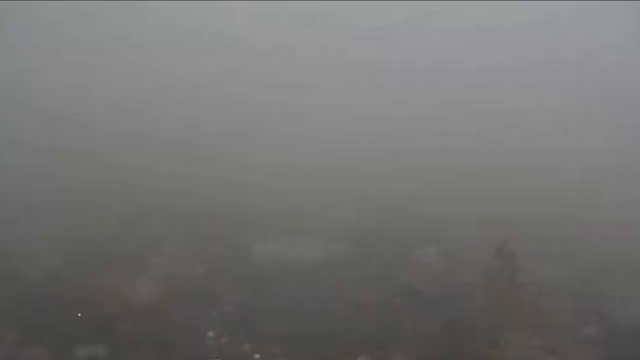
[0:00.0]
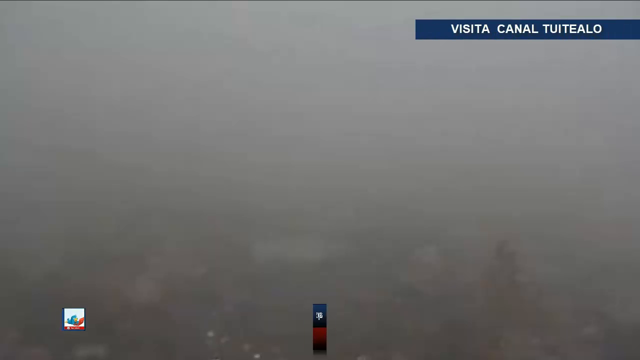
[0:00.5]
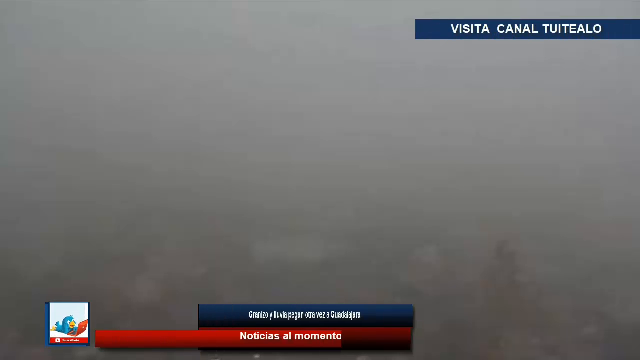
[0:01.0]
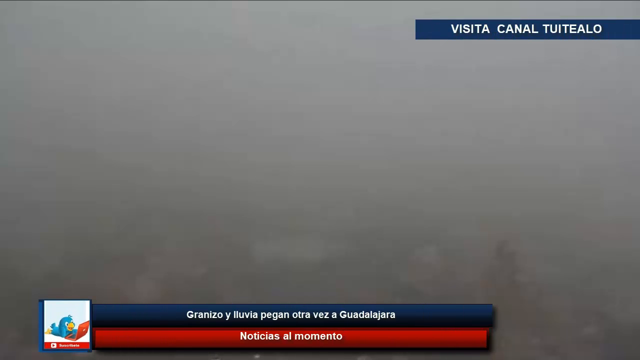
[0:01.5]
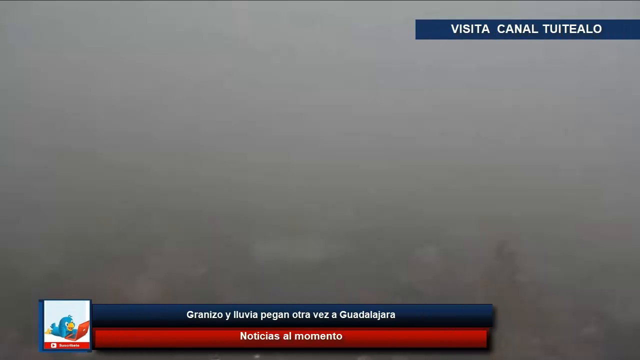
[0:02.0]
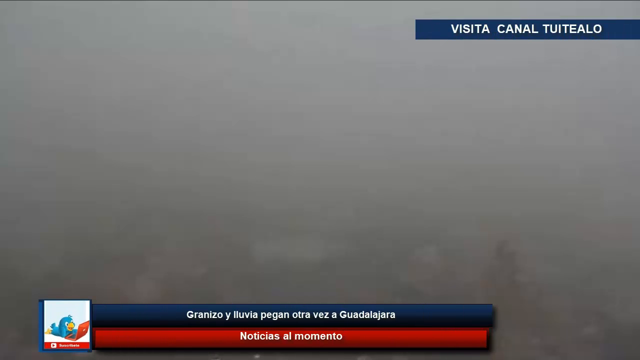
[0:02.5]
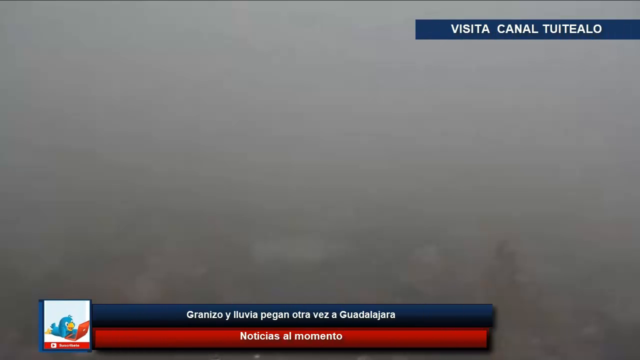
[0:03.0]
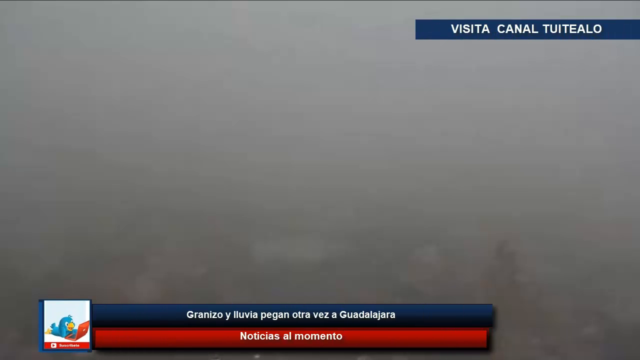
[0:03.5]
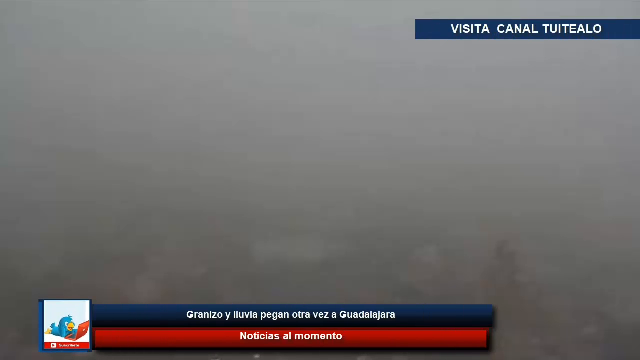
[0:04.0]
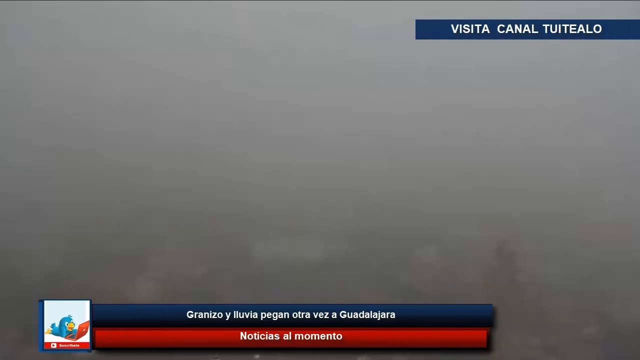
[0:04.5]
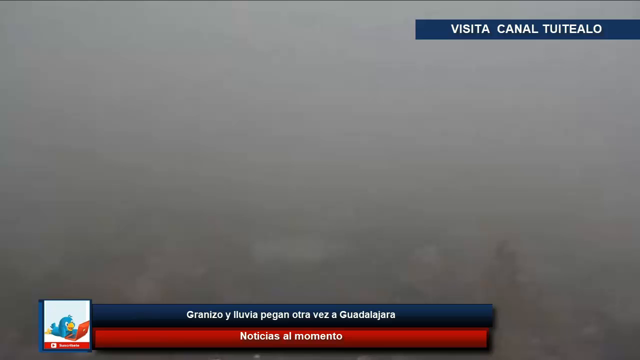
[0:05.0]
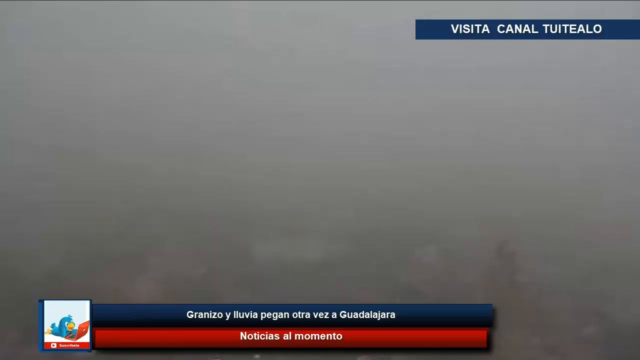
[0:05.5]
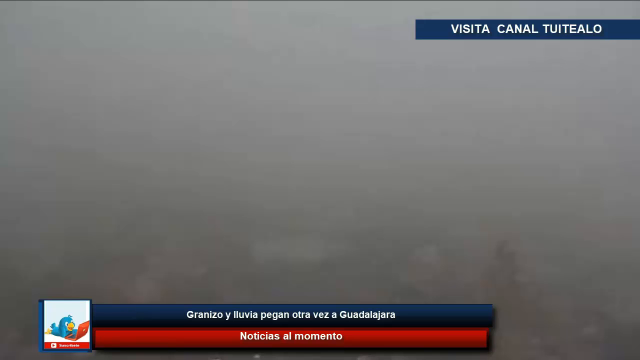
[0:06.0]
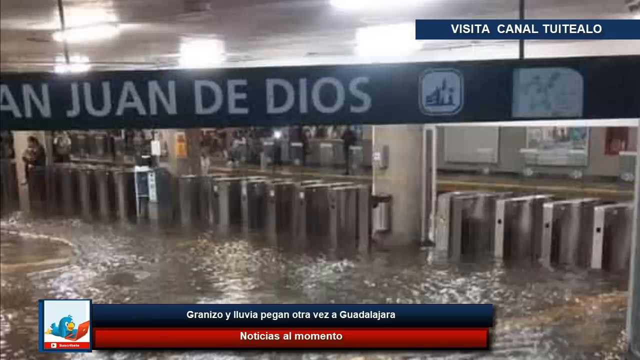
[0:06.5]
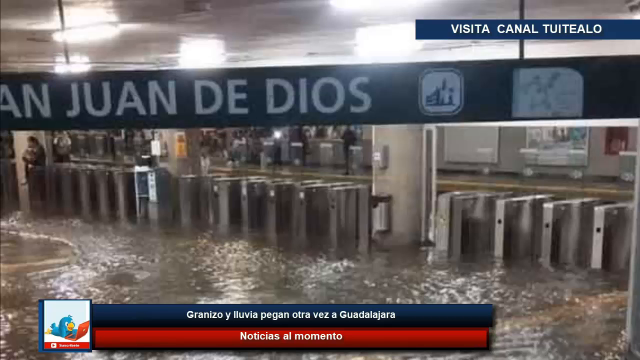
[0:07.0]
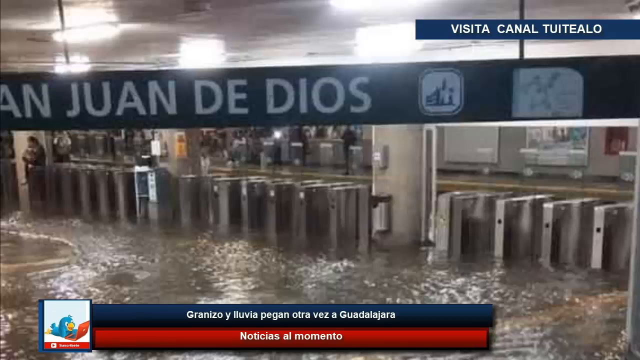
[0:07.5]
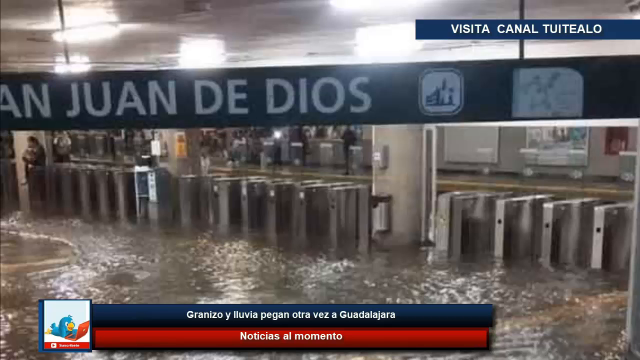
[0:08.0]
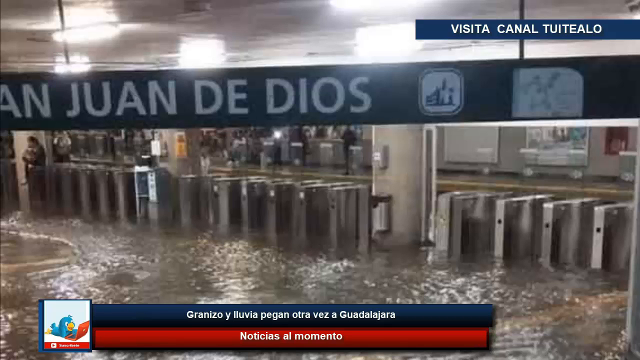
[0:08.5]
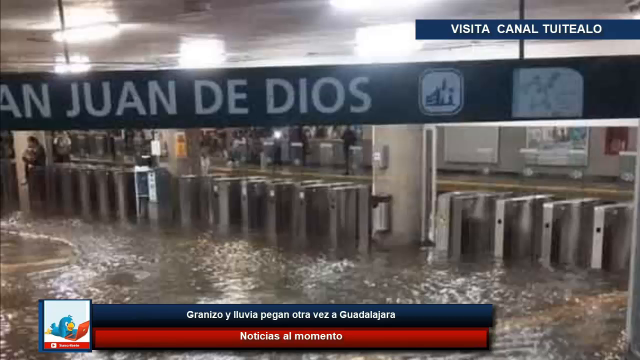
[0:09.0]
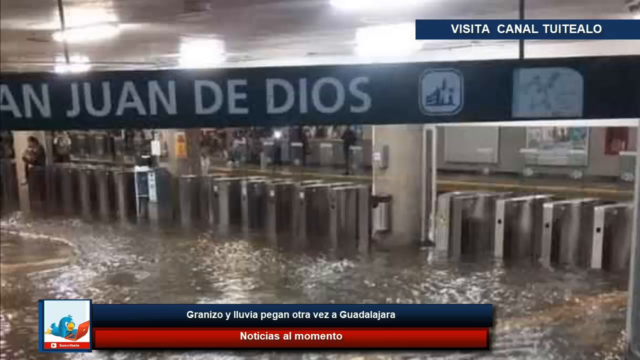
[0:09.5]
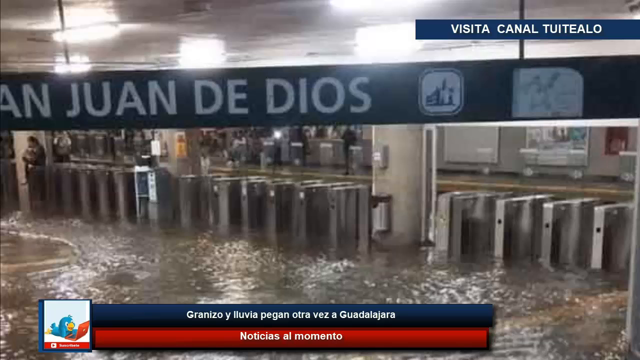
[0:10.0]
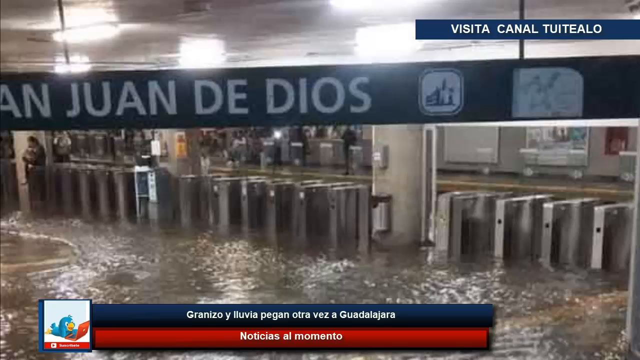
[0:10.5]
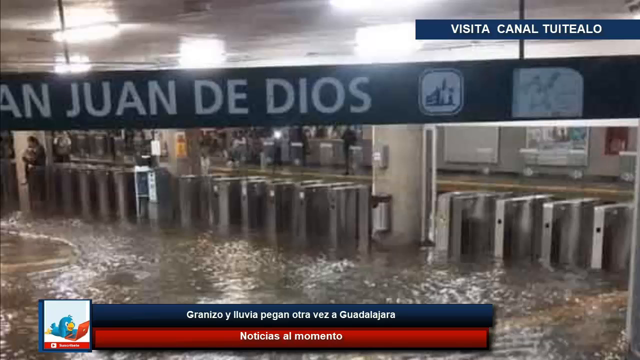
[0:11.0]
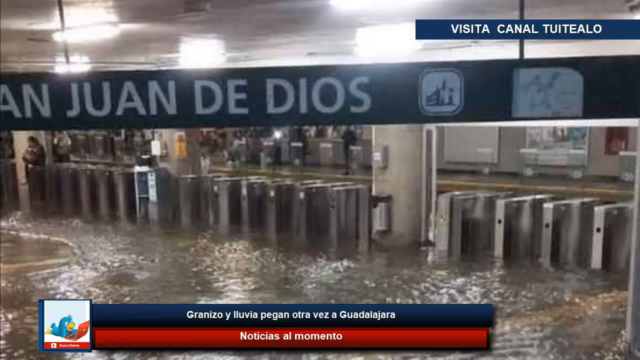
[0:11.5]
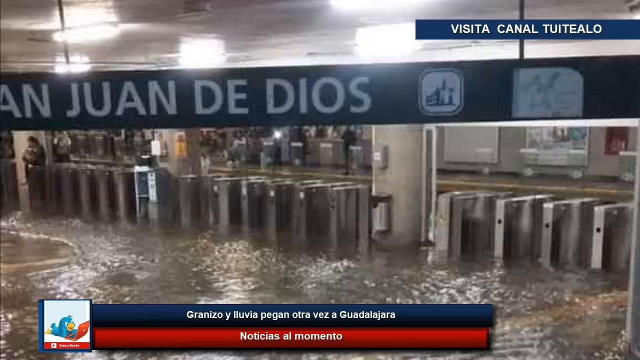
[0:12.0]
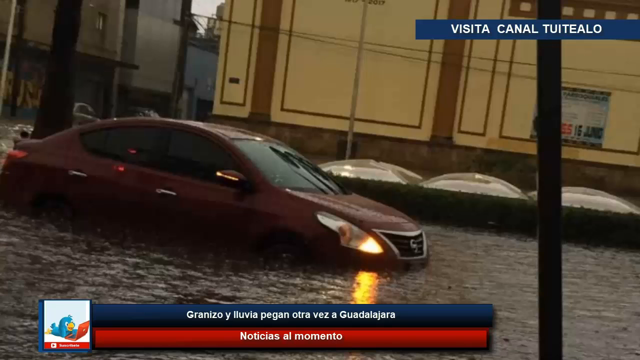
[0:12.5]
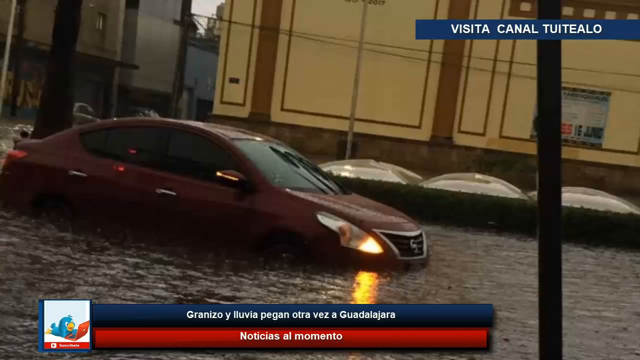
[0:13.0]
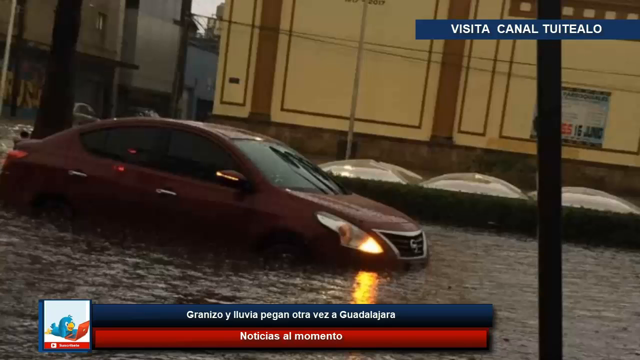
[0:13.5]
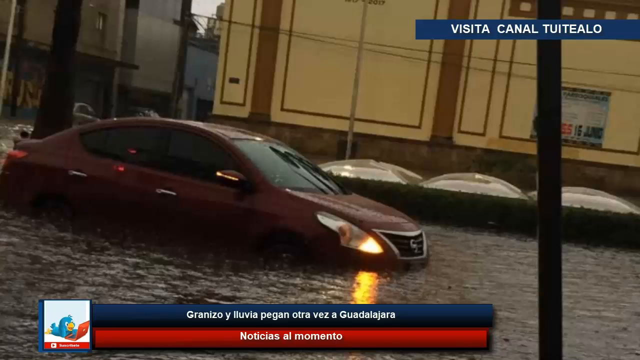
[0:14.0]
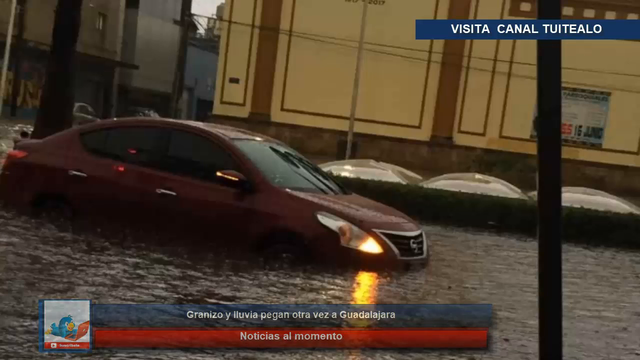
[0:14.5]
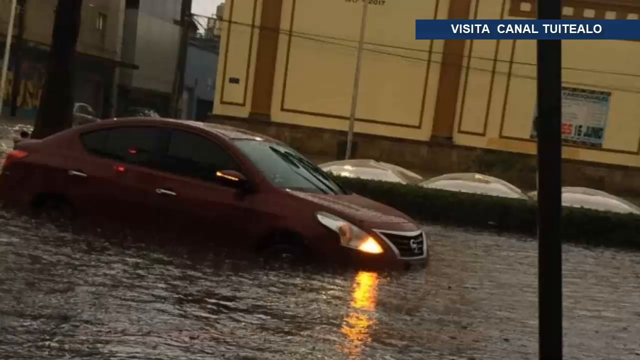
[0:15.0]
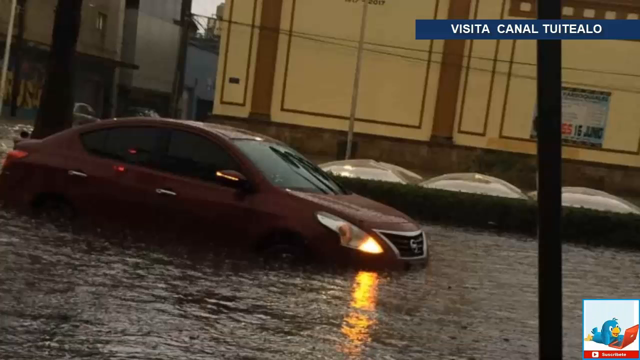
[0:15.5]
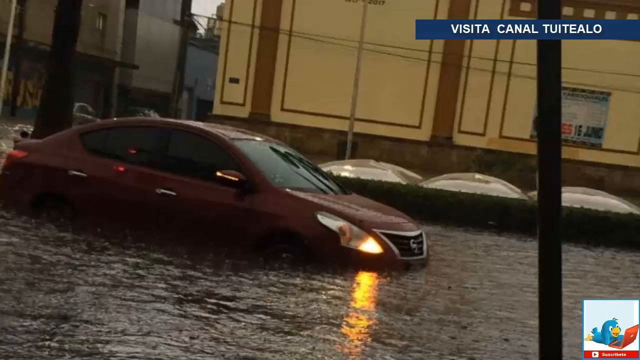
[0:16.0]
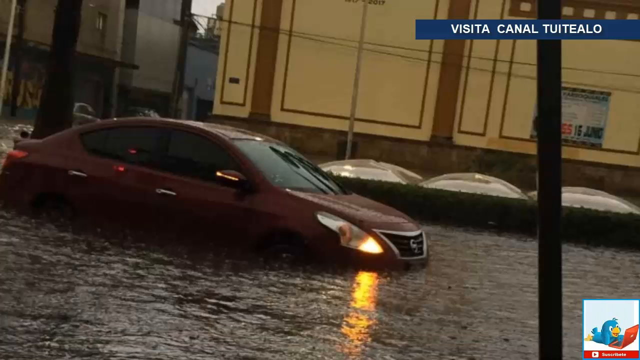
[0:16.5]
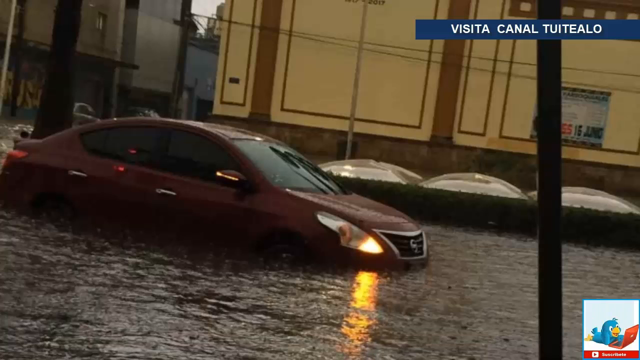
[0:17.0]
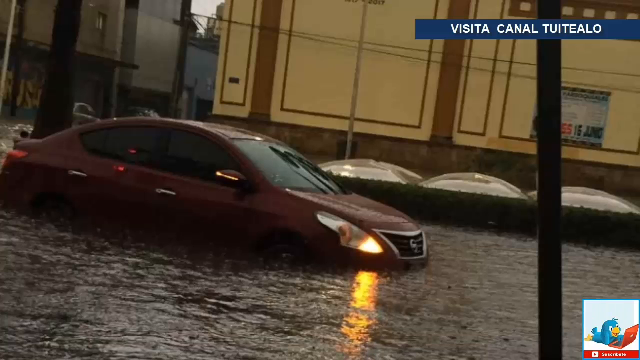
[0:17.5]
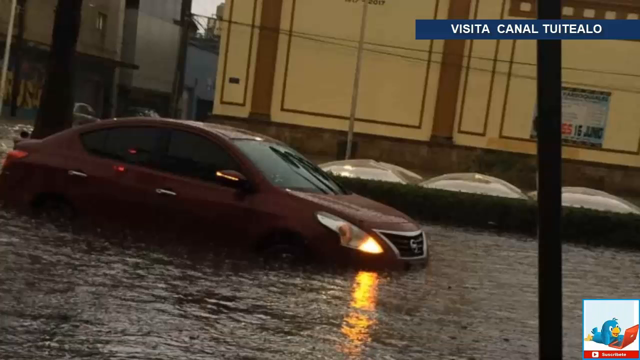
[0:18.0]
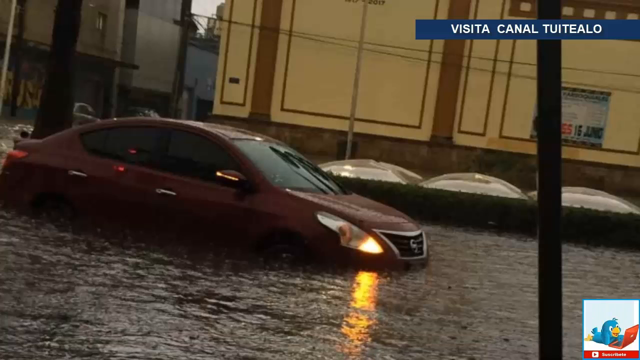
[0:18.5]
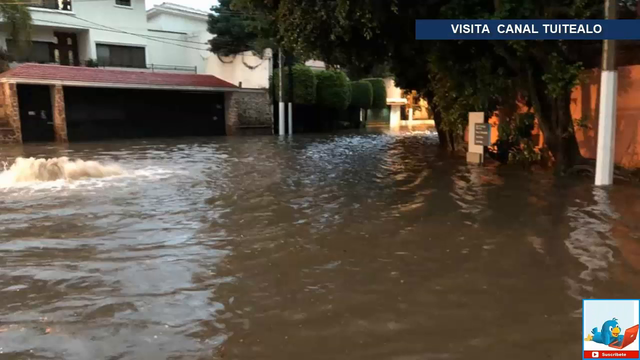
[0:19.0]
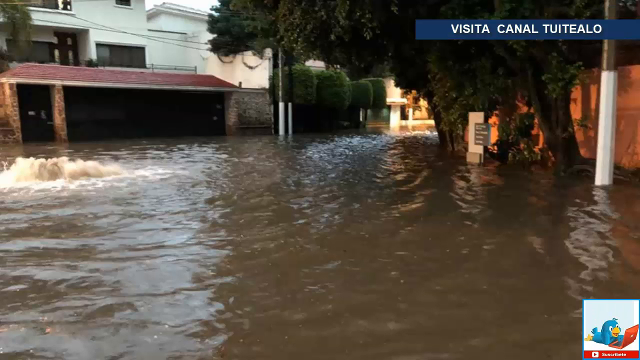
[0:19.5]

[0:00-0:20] A huge space with water inside has grey walls and bulbs or lights at the top. An individual who doesn't know how to escape the water is sitting on top of a little chair. The video changes to an outdoor view of a car in the water. The car is trying to pass along the road but can't because there is too much water. The car is red and has black windows. In the background there are other cars, and there are buildings around the area. The rain has made it difficult for the car to move.